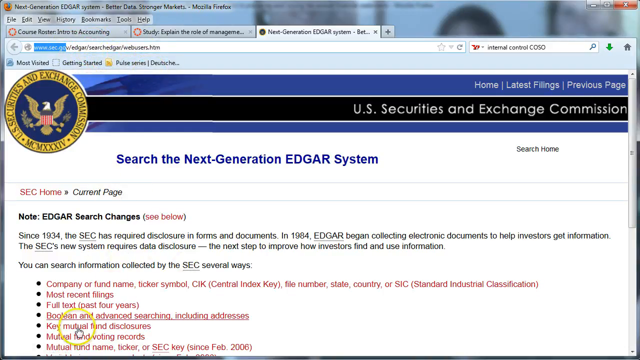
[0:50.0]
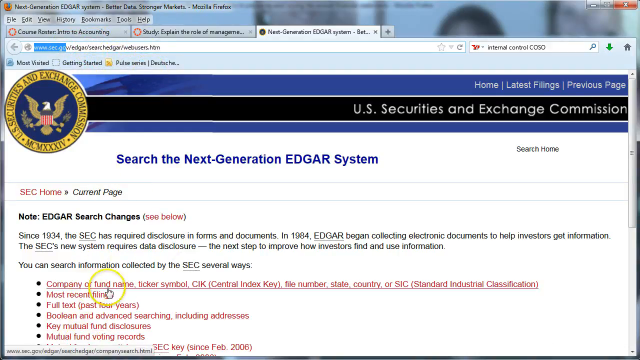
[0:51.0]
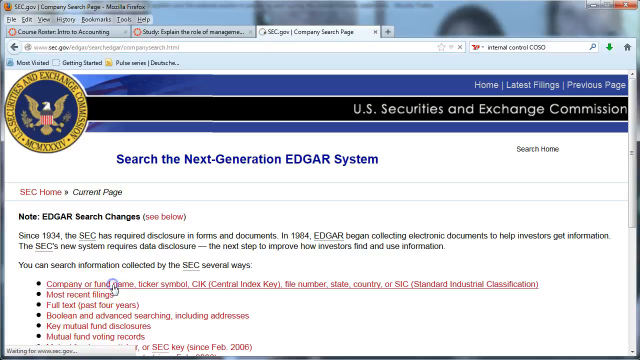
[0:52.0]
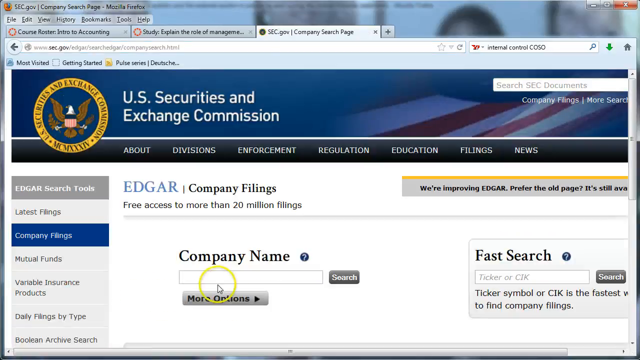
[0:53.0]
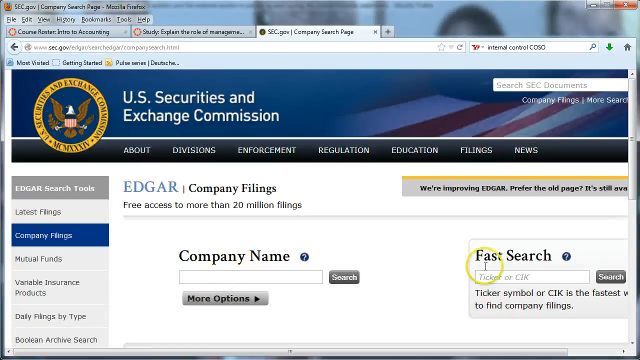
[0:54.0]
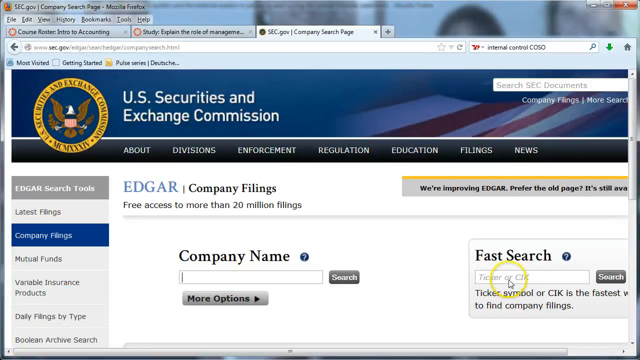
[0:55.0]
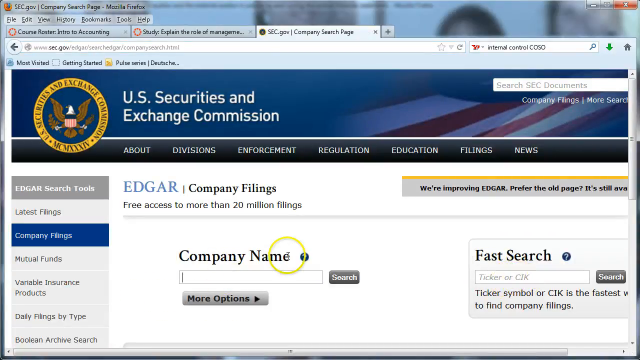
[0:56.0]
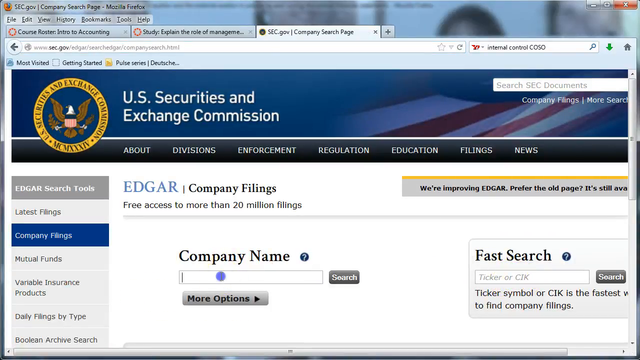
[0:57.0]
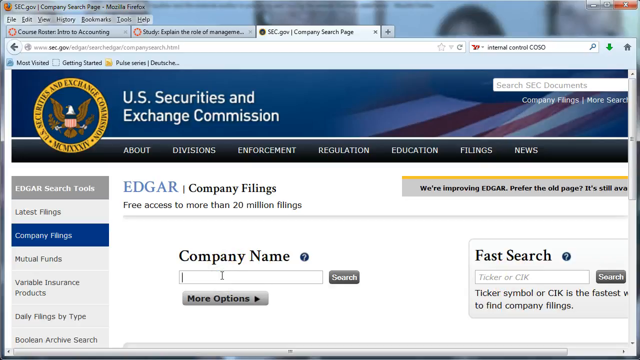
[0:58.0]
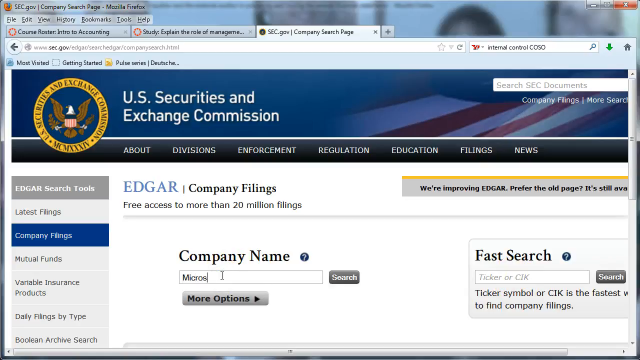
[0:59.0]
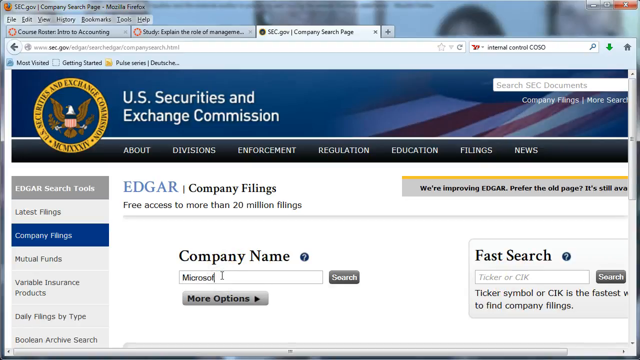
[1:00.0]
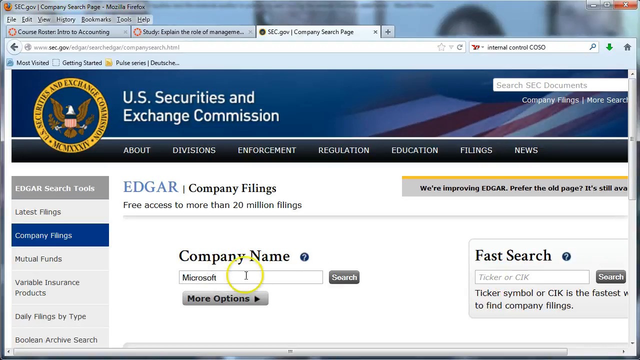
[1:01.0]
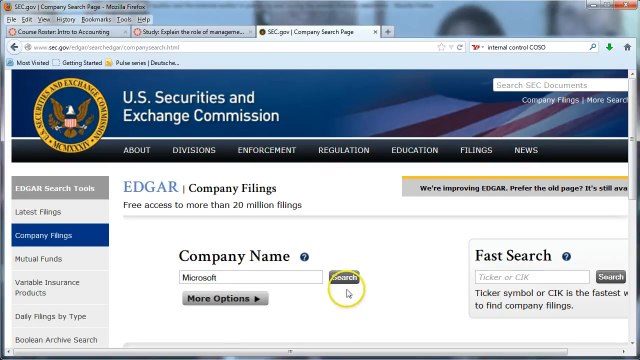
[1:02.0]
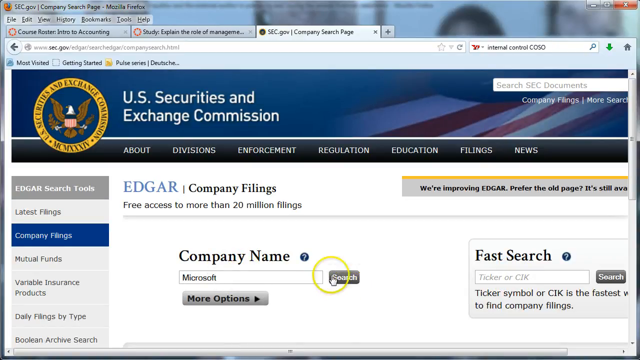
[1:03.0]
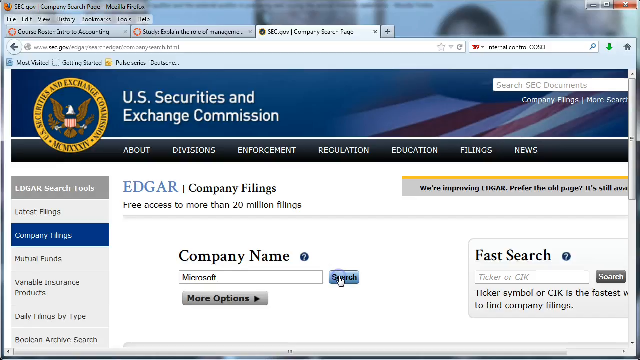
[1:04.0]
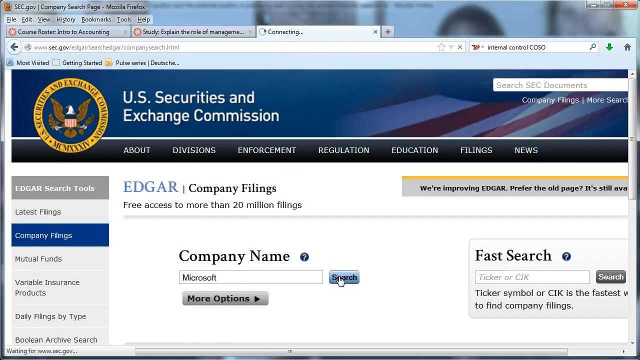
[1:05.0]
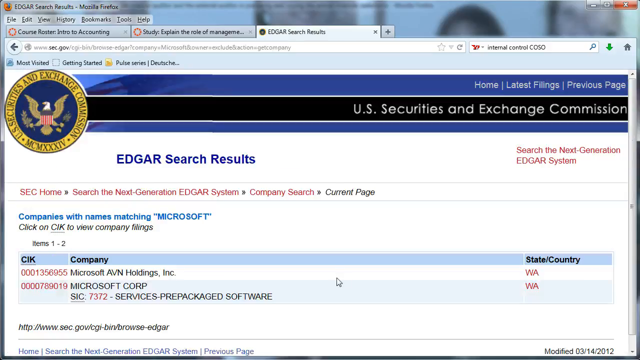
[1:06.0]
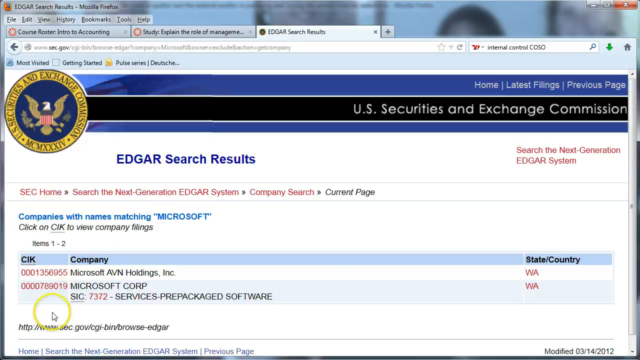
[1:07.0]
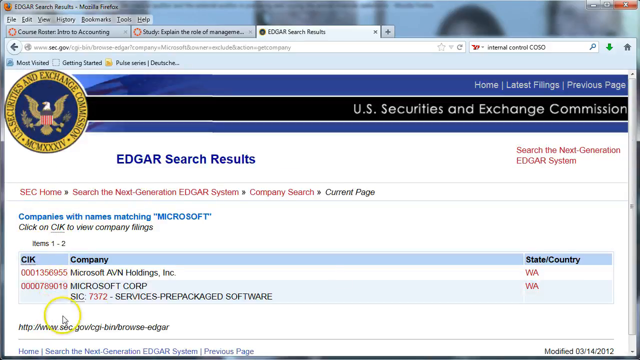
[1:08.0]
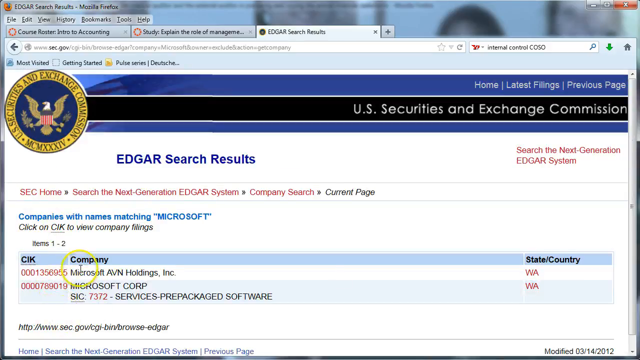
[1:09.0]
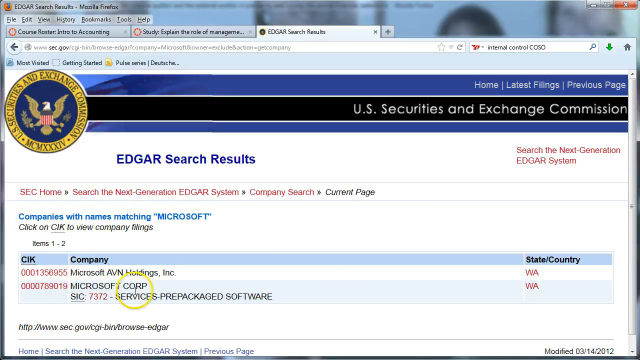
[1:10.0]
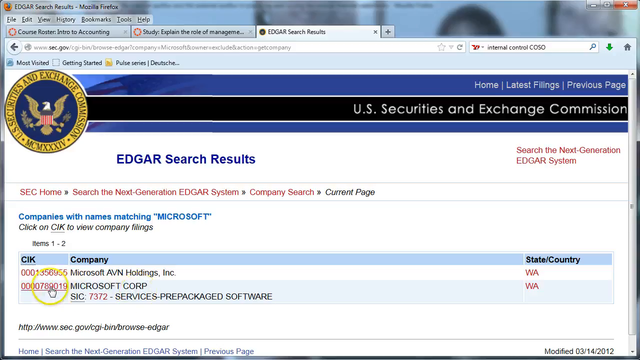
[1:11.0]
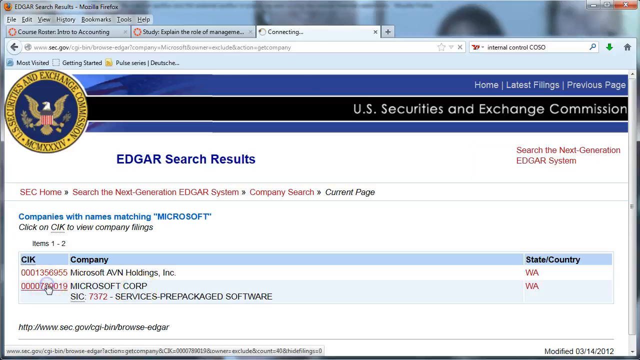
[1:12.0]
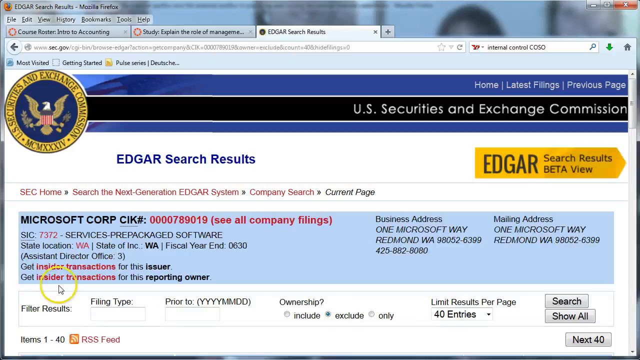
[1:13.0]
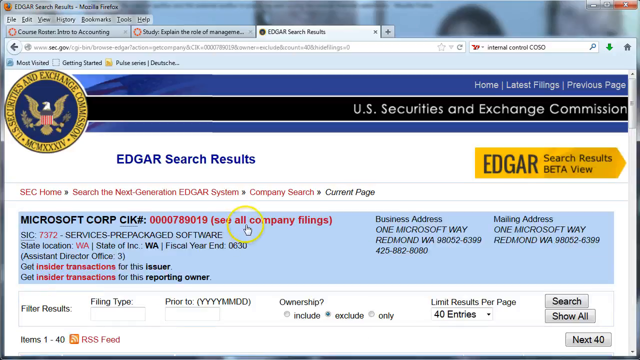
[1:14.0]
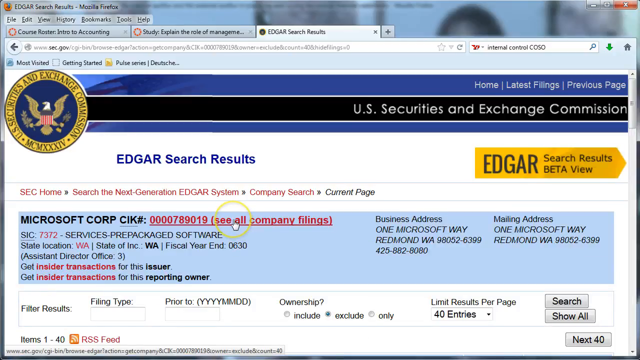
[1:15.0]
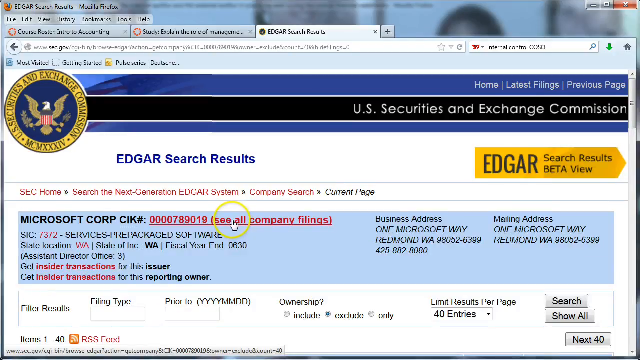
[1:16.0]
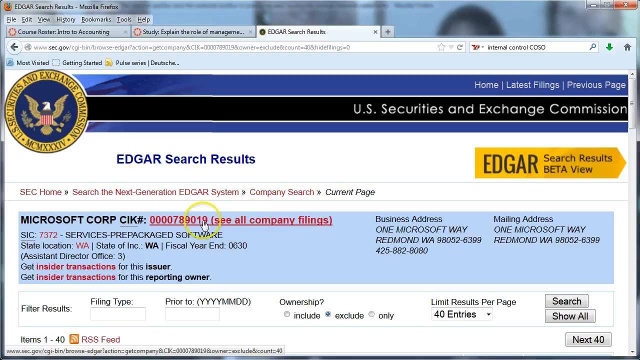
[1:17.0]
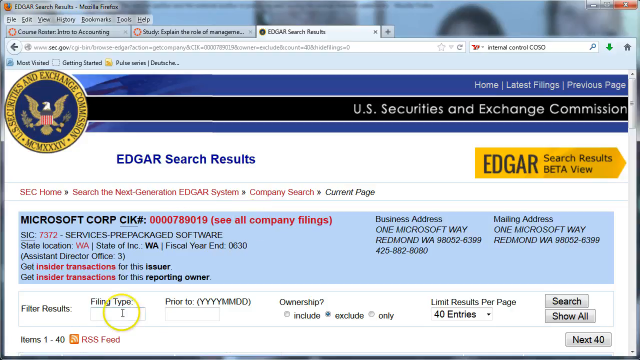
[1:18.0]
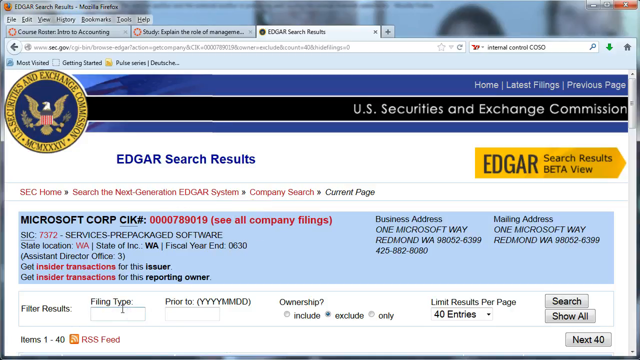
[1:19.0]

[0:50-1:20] A new tab shows the homepage of the US Securities and Exchange Commission, reached through the blue EDGAR hyperlink. With the mouse, the user highlights a red hyperlink reading "company or fund name, ticker symbol, CIK", which leads to a page for company names and appears to be a way to search for a company. The cursor moves to the right-hand side of the page, which concerns the company name, and onto a label under "fast search": a search box whose label apparently says "ticker or CIK".